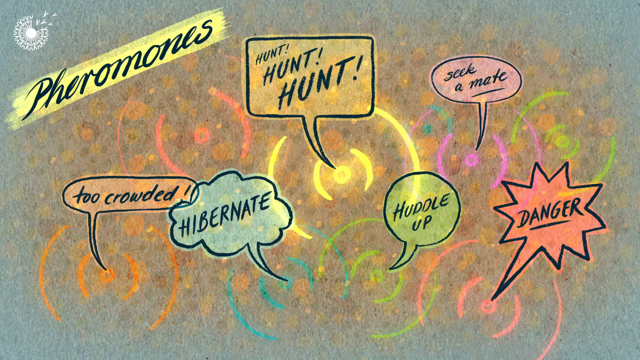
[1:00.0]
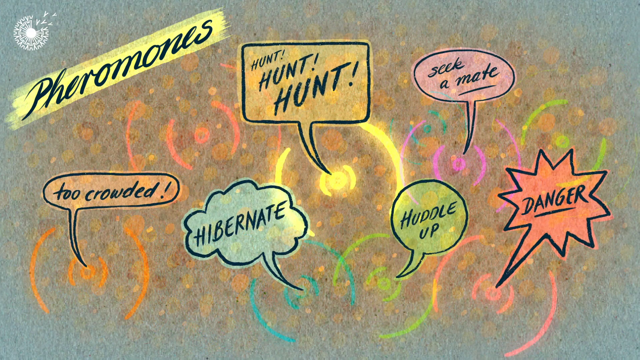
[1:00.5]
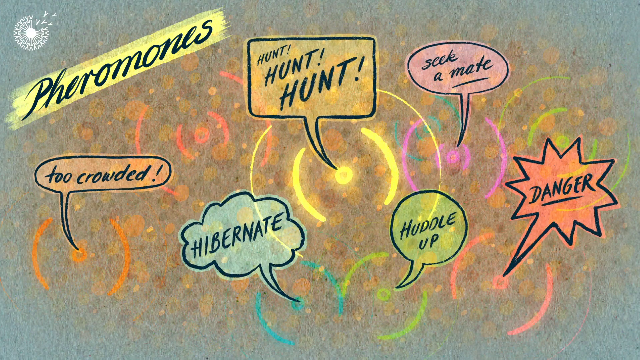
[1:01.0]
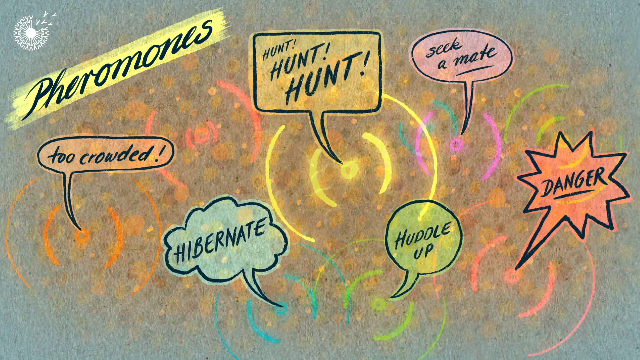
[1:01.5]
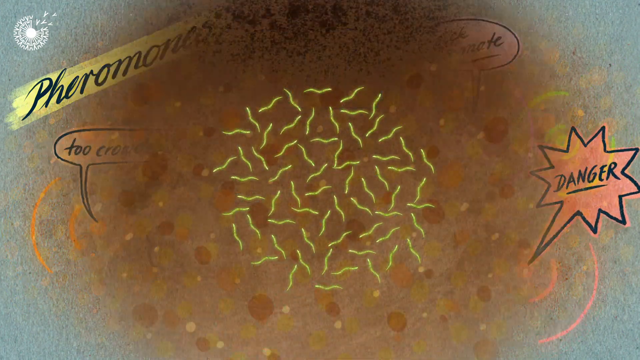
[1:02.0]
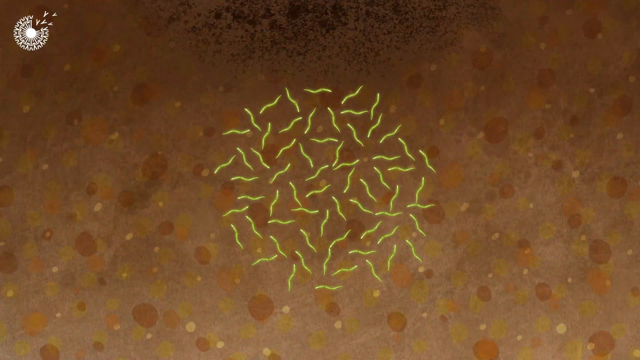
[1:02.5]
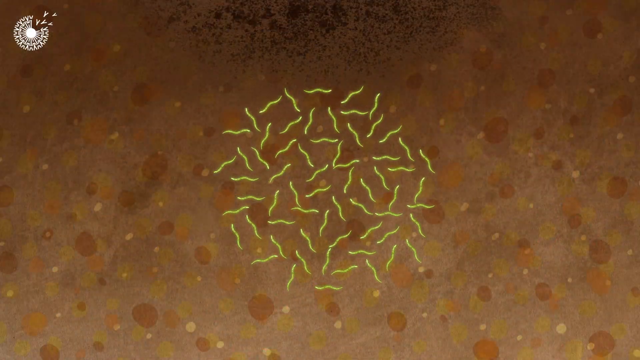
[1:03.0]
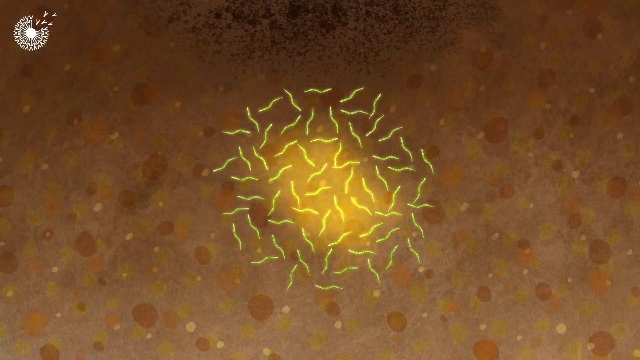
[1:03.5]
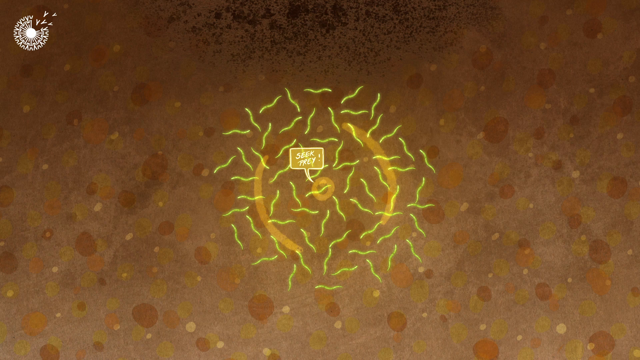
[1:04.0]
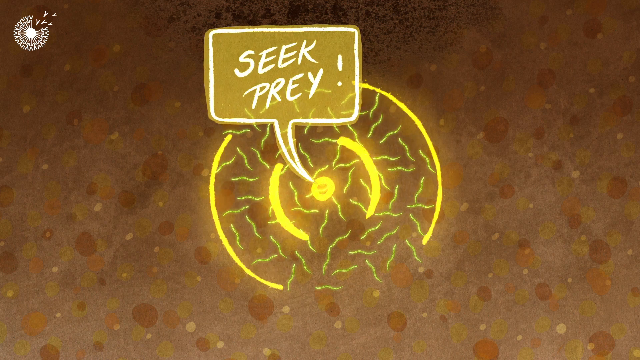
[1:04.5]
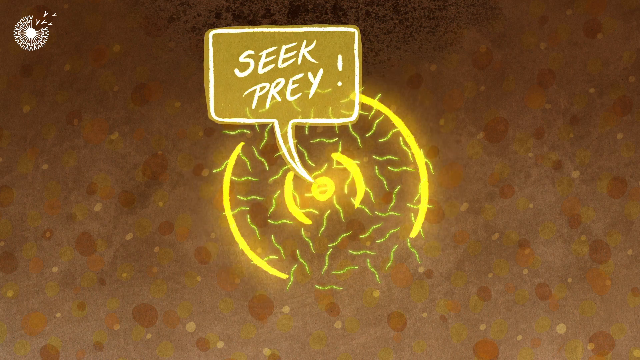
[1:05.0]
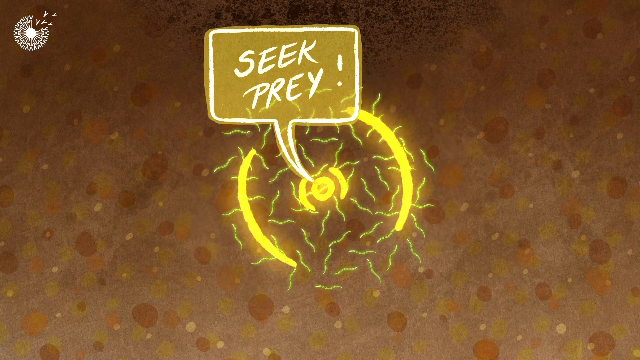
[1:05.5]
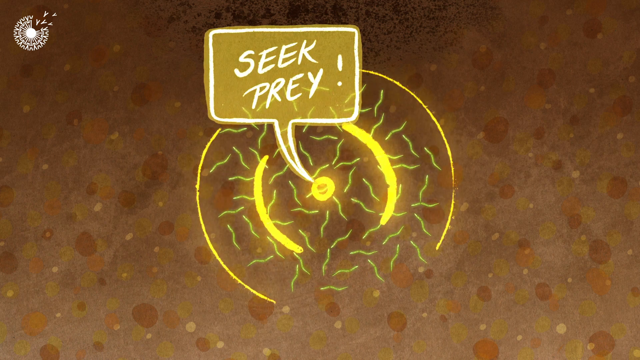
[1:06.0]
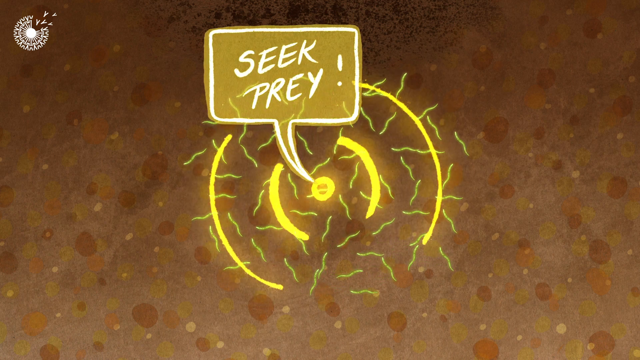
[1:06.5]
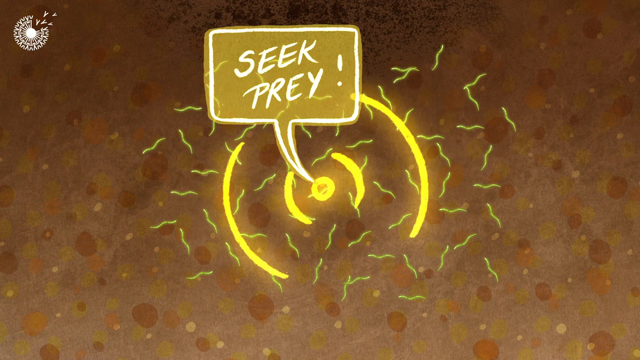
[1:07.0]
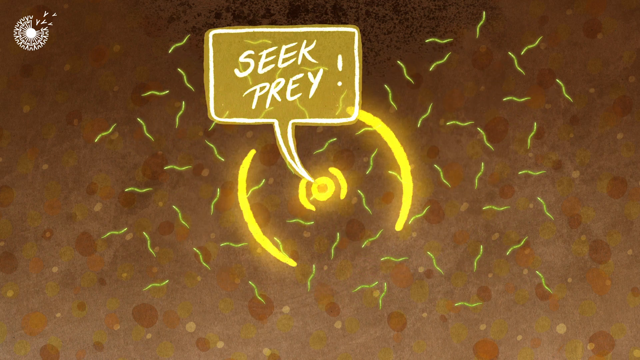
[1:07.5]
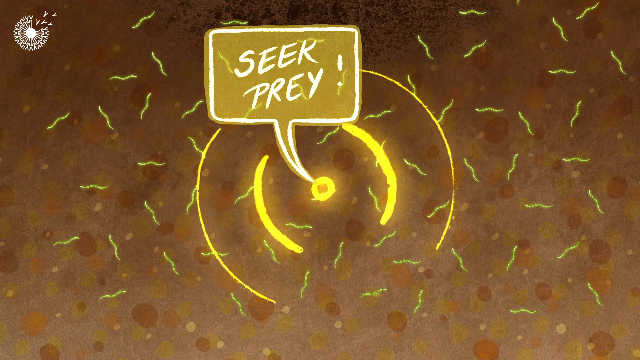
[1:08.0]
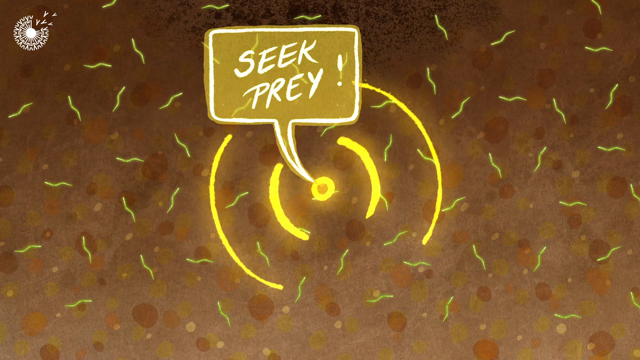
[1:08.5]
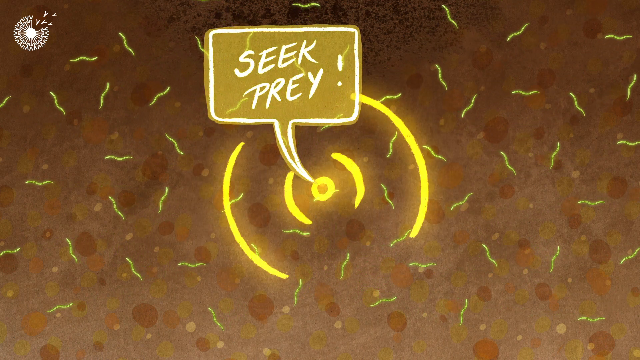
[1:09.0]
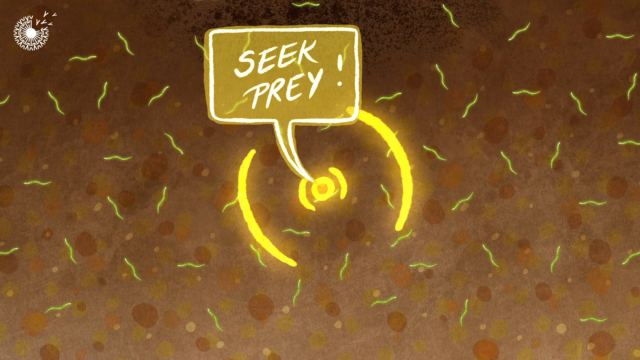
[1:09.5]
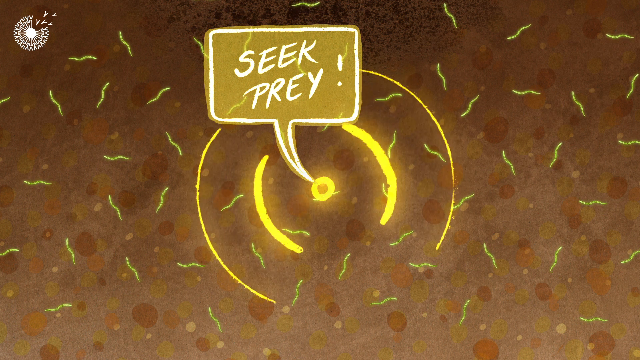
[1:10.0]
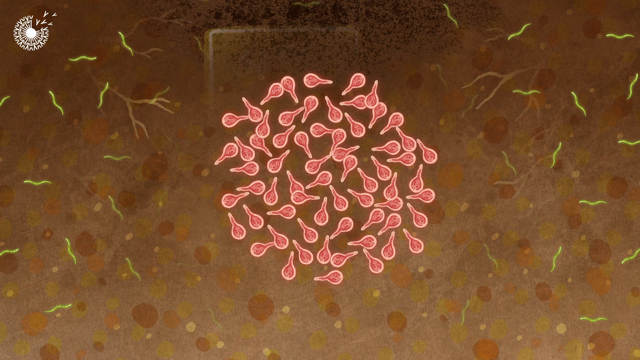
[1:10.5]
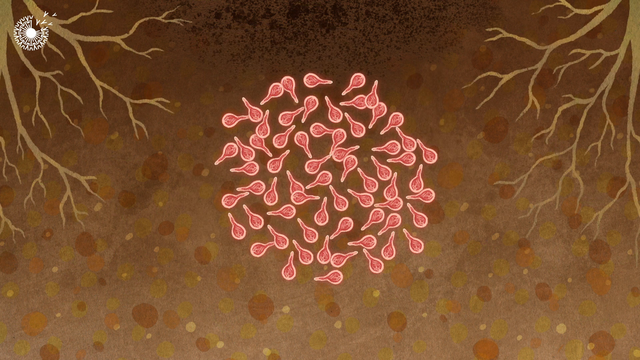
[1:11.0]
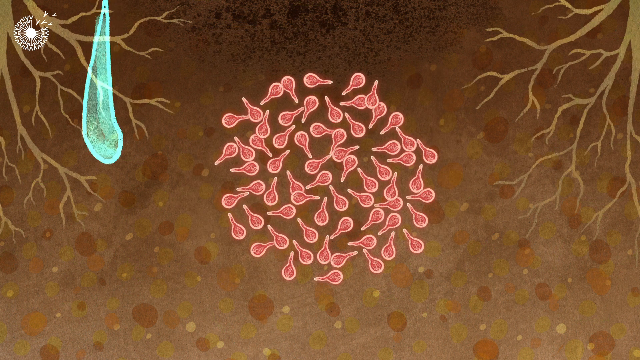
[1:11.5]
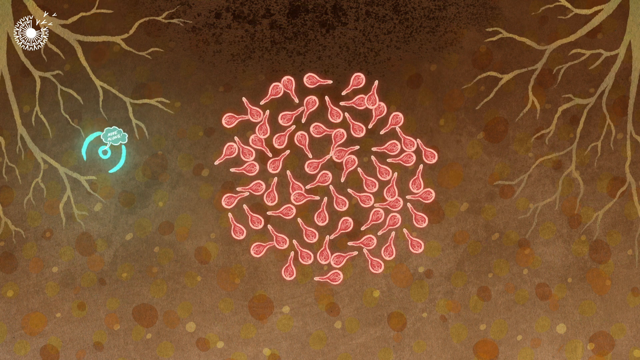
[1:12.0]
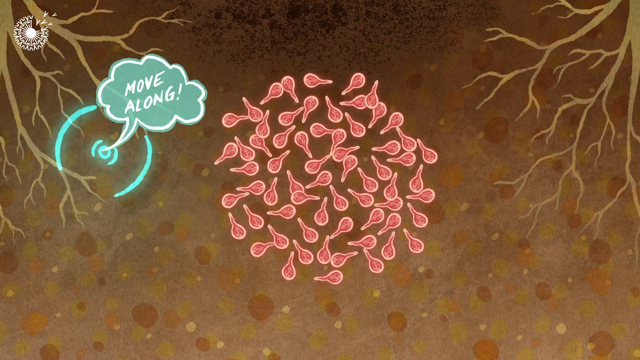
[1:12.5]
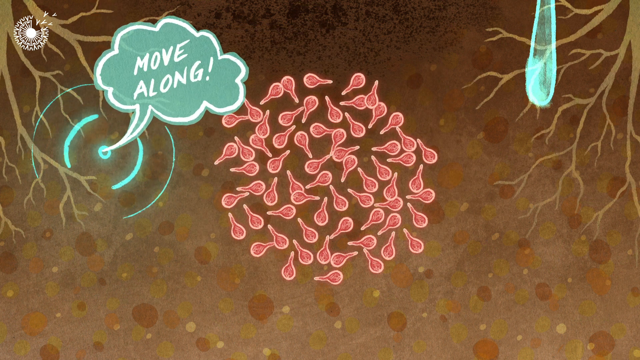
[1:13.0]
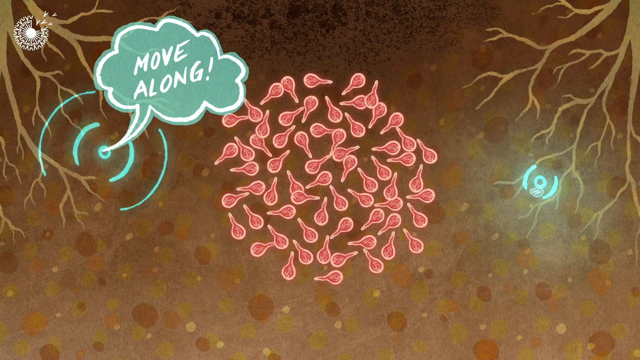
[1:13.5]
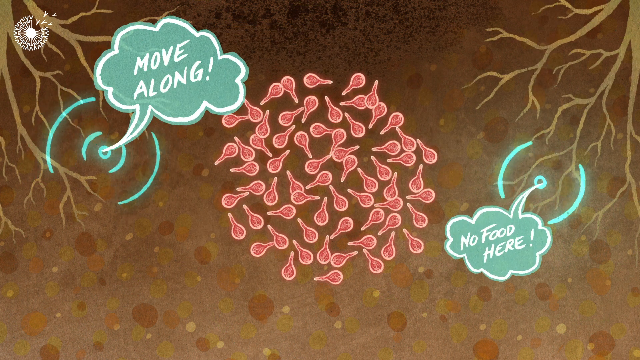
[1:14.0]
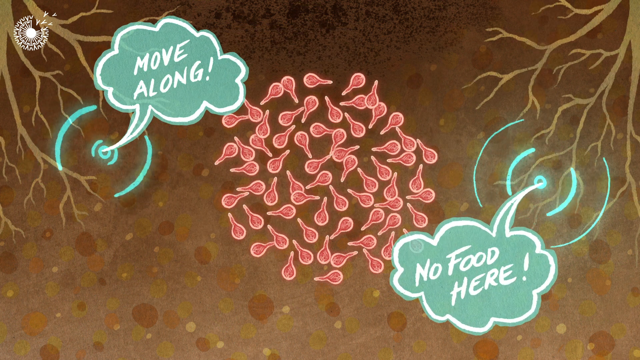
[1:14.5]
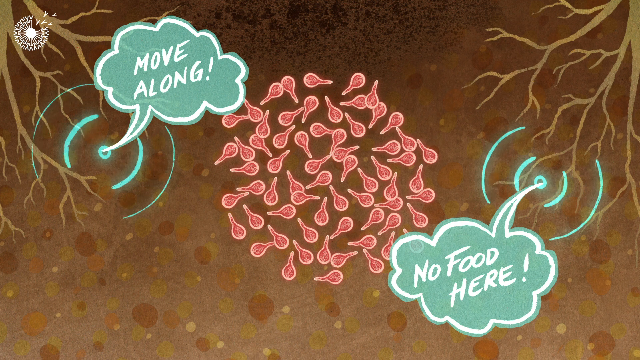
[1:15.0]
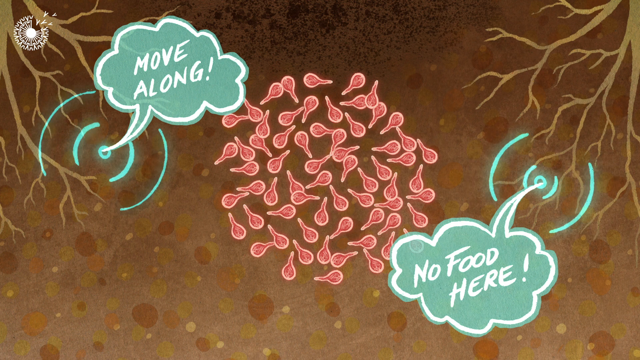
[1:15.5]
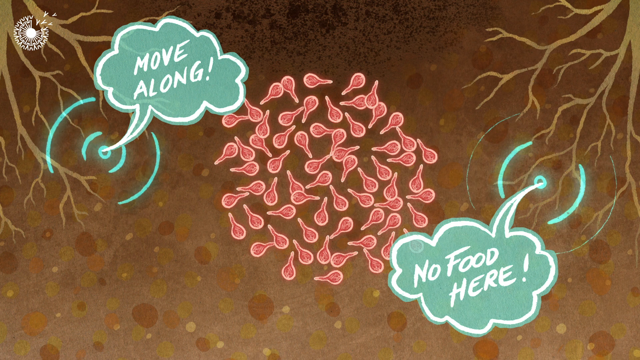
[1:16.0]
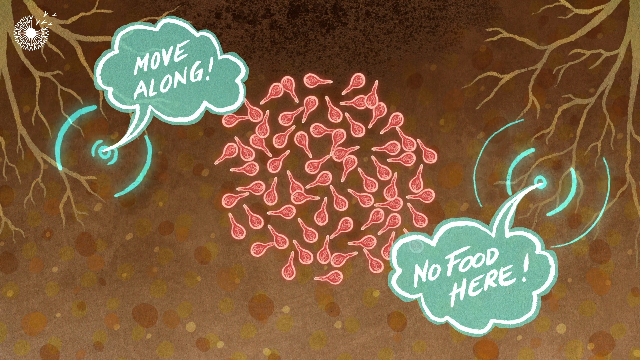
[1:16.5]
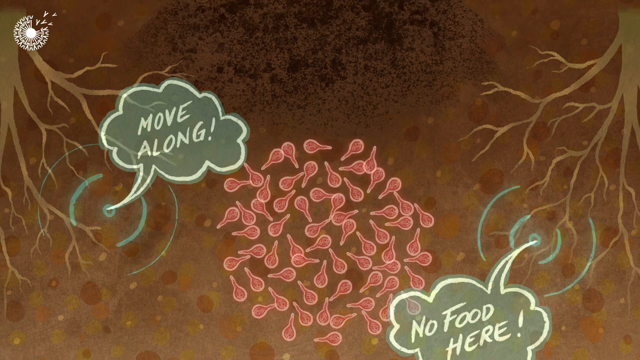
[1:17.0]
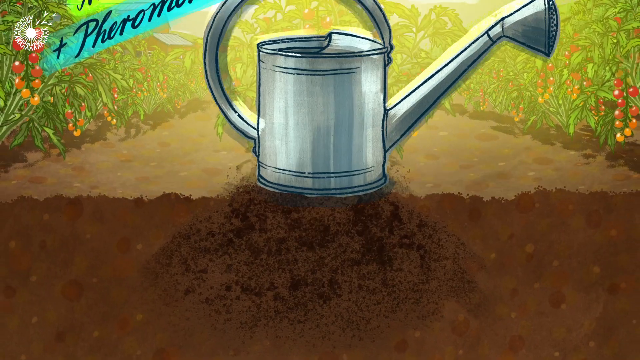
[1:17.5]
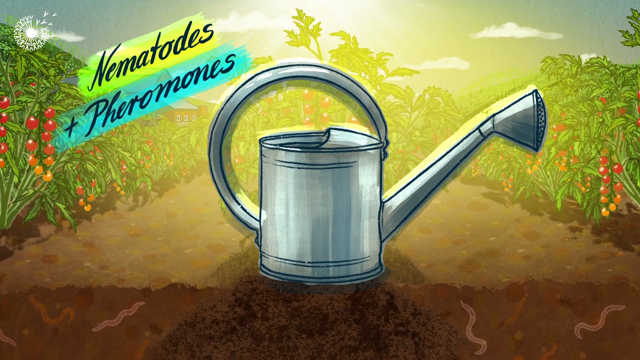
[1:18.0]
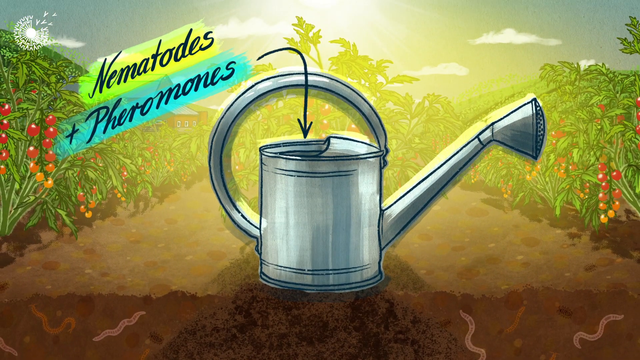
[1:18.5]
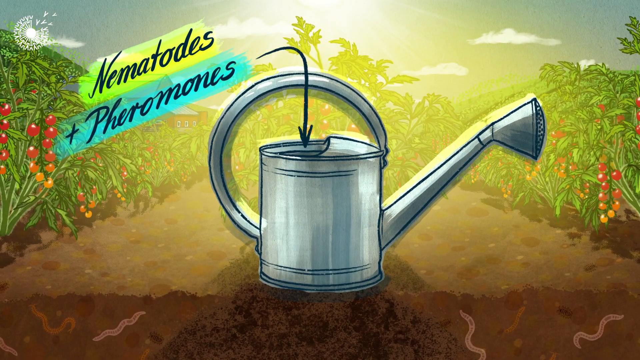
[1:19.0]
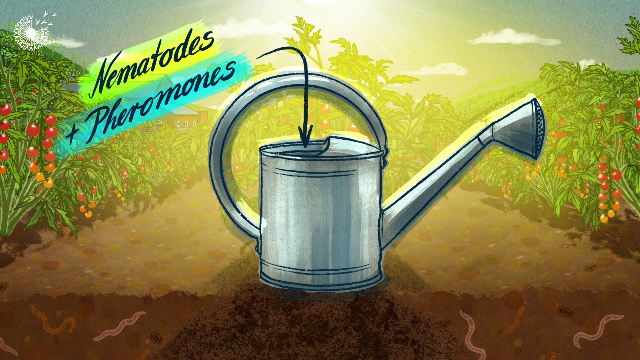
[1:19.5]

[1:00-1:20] The animation looks like it shows pheromones and other things happening in the soil around a plant's roots. Many text bubbles are on screen: at the top left, a yellow highlight with black text reads "pheromones," and in the middle are many dialogue boxes, the most prominent being the central one reading "hunt, hunt, hunt." From left to right, others read "too crowded," "hibernate," "huddle up" and "danger." There are many signal signs in orange, red, blue and yellow. Suddenly many little green worms appear, a yellow drop lands on them, and a dialogue box reads "seek prey." The green worms spread out over the brown soil with the yellow signal coming out. Many red bulbs are in the middle of the animation. On the left, a blue signal in a bubble reads "move along," and on the right another bubble reads "no food here." The view pans upward to a watering can. At the top left, blue text reads "nematodes plus pheromones," with an arrow pointing down into the watering can. The nematodes and pheromones apparently are being used to fight off the red bulbous things.